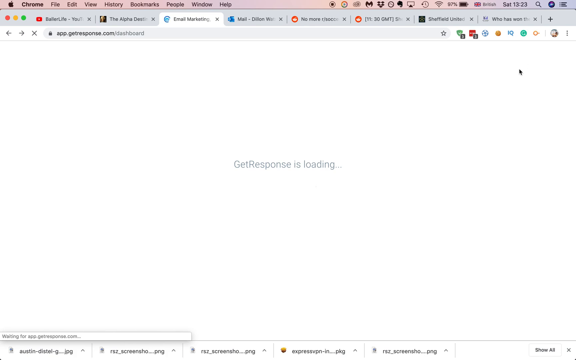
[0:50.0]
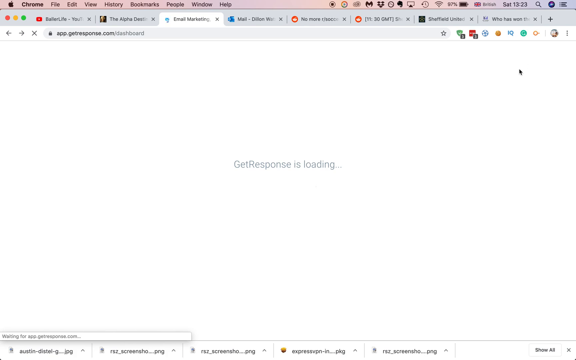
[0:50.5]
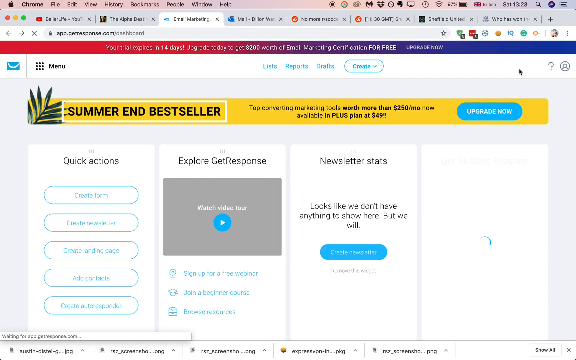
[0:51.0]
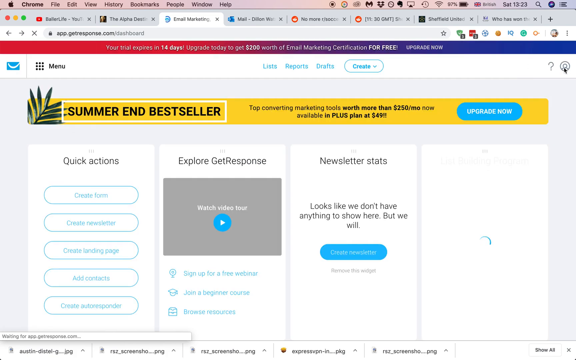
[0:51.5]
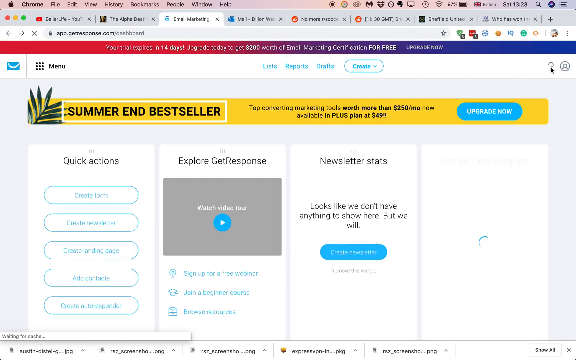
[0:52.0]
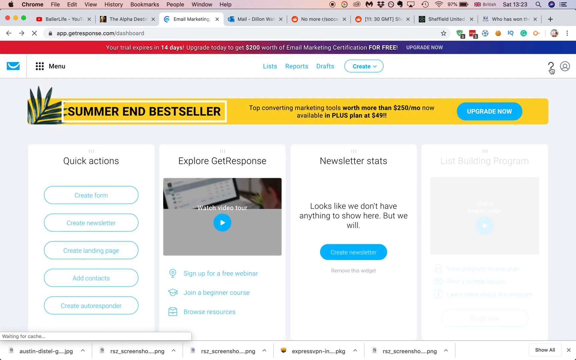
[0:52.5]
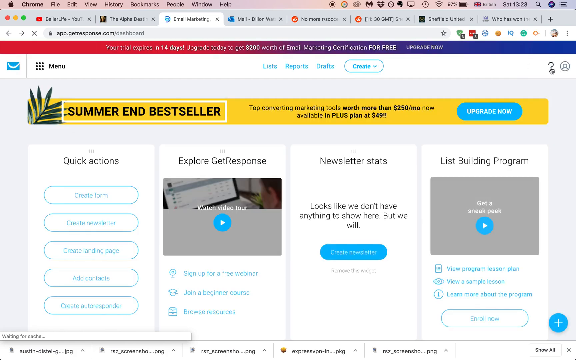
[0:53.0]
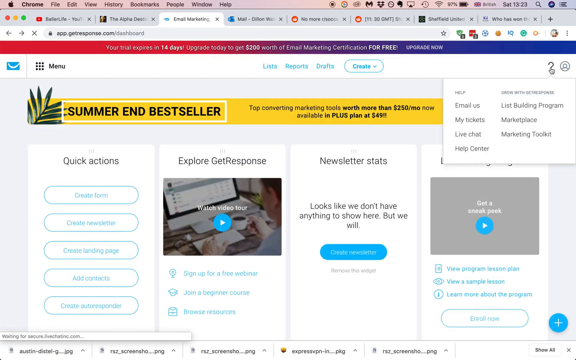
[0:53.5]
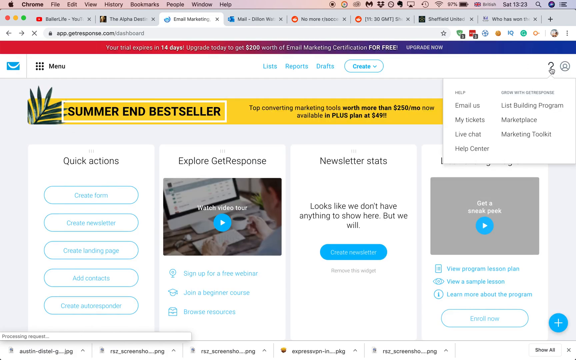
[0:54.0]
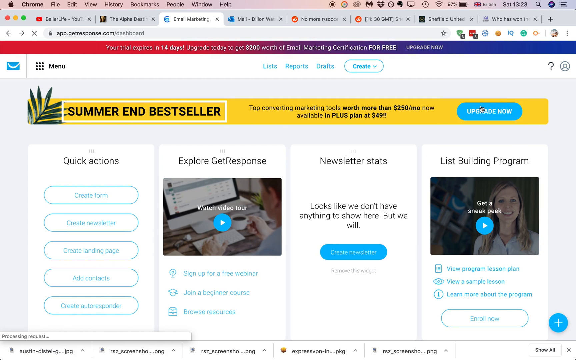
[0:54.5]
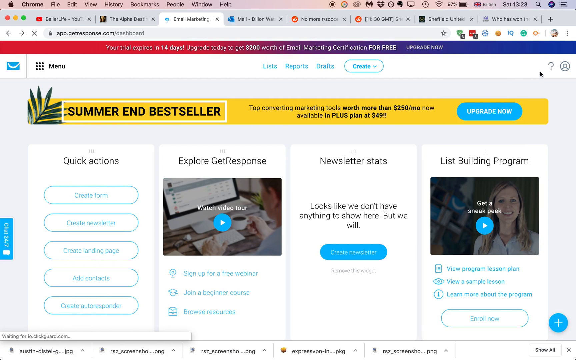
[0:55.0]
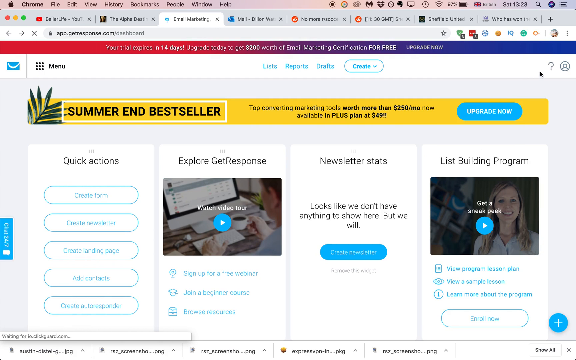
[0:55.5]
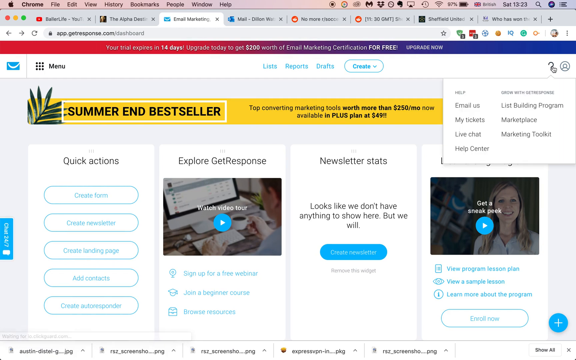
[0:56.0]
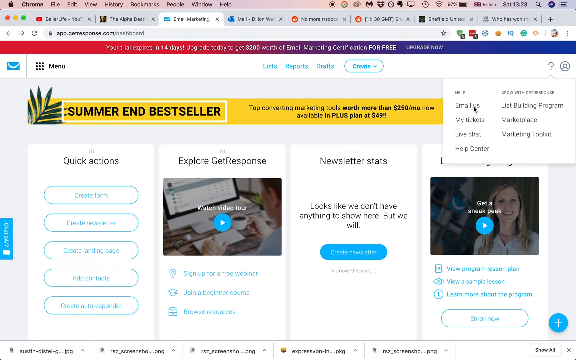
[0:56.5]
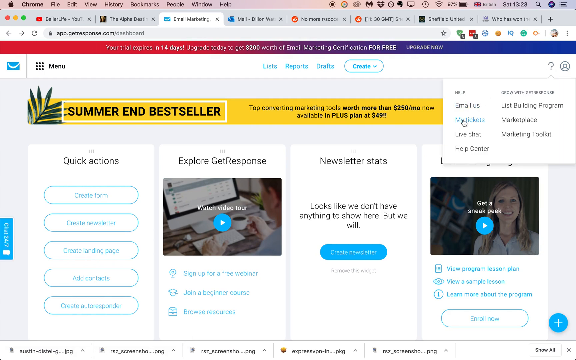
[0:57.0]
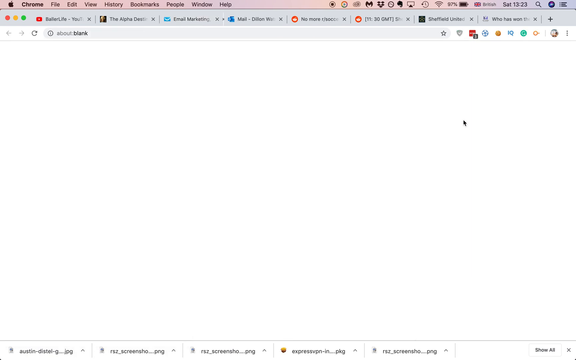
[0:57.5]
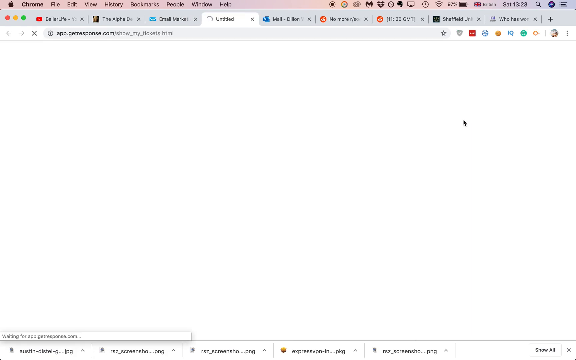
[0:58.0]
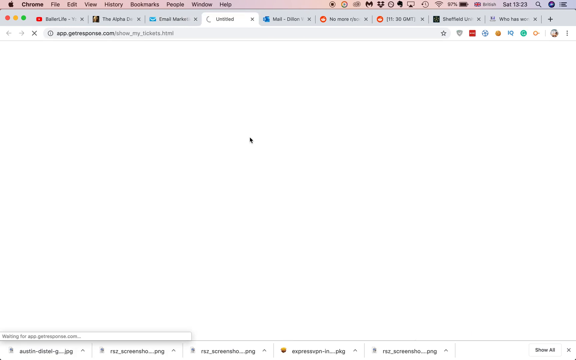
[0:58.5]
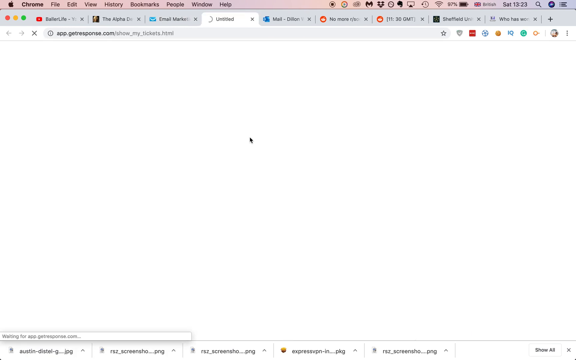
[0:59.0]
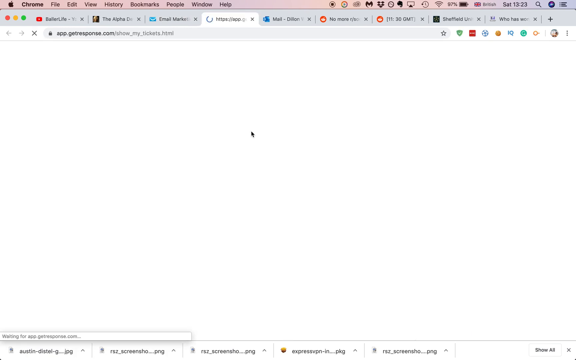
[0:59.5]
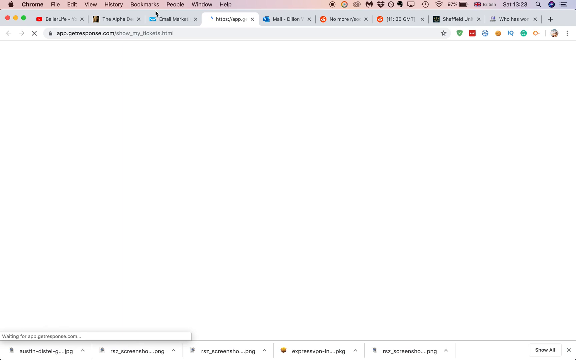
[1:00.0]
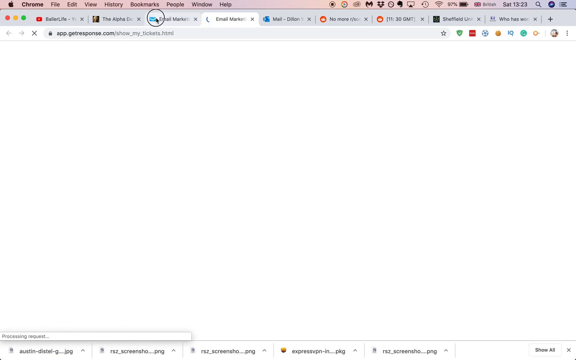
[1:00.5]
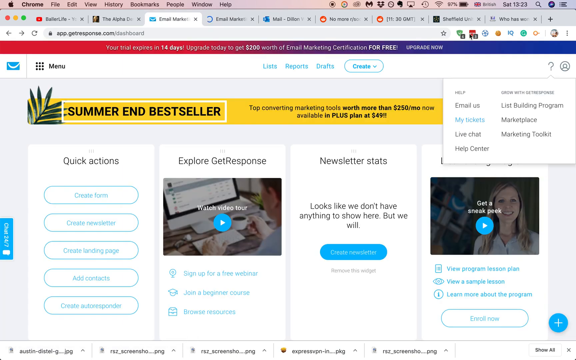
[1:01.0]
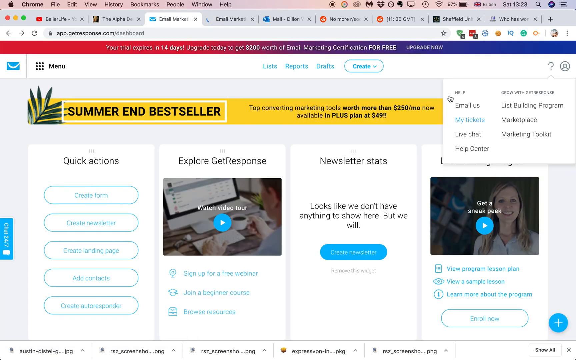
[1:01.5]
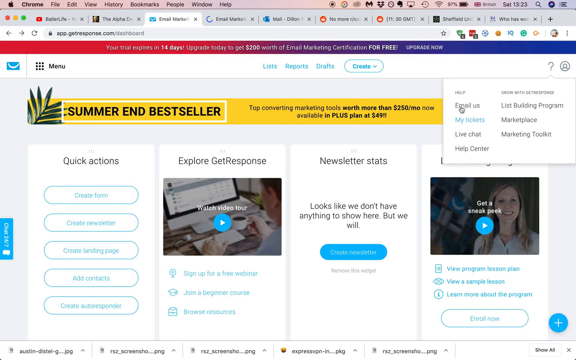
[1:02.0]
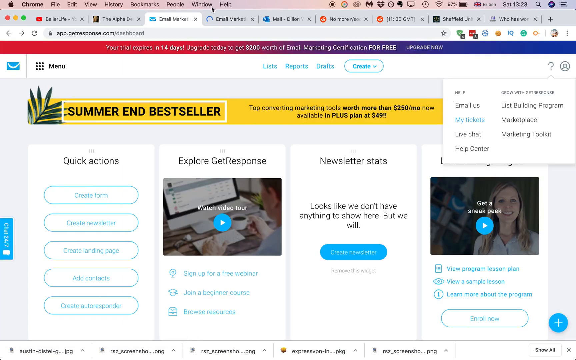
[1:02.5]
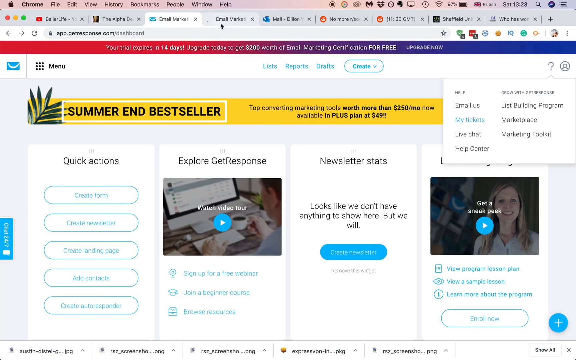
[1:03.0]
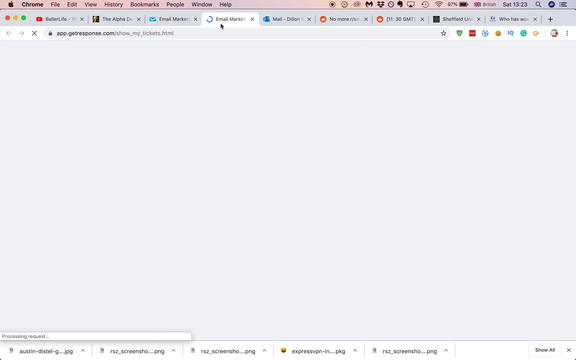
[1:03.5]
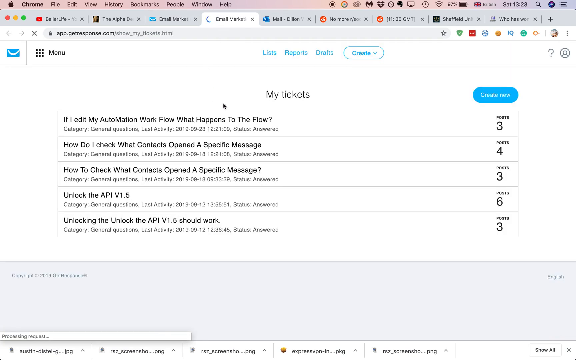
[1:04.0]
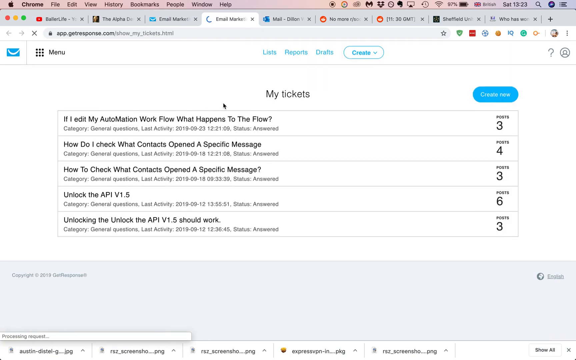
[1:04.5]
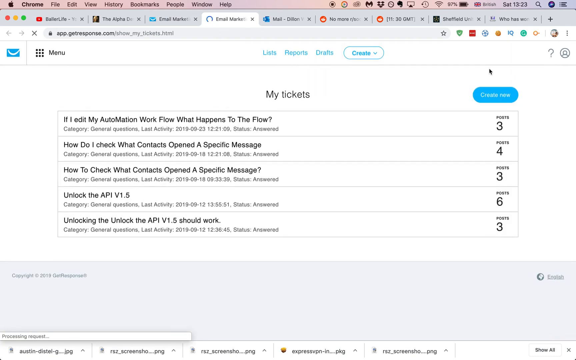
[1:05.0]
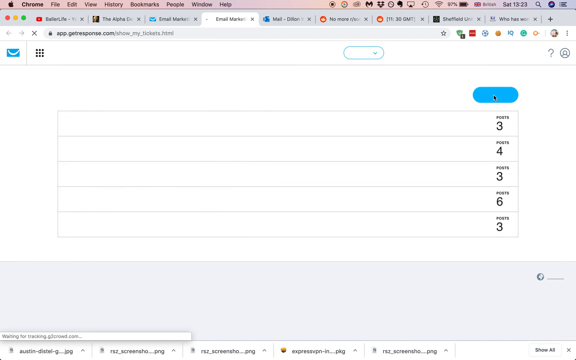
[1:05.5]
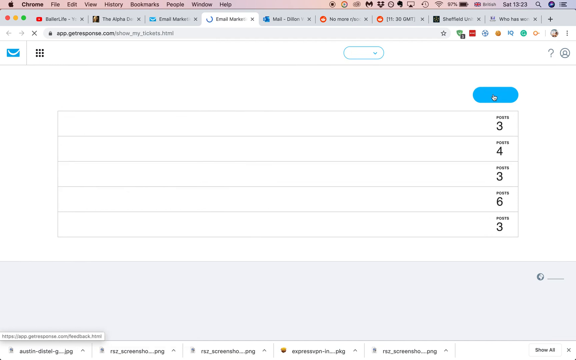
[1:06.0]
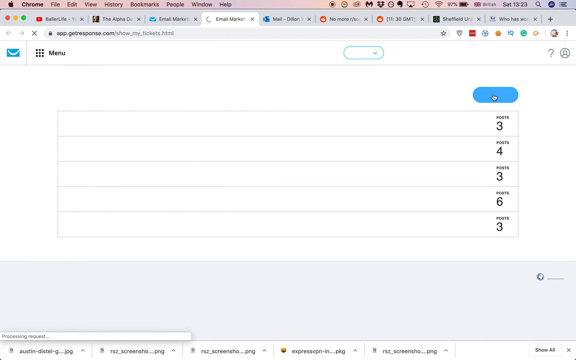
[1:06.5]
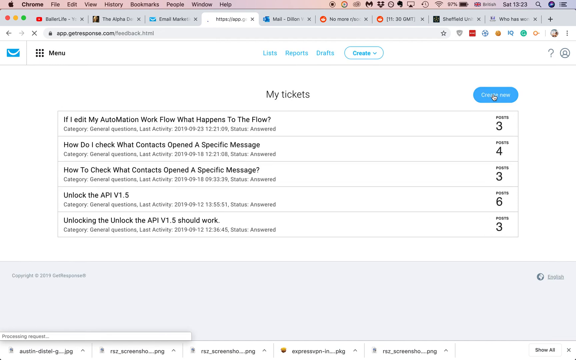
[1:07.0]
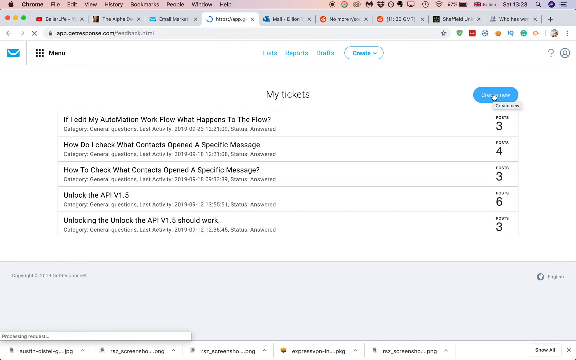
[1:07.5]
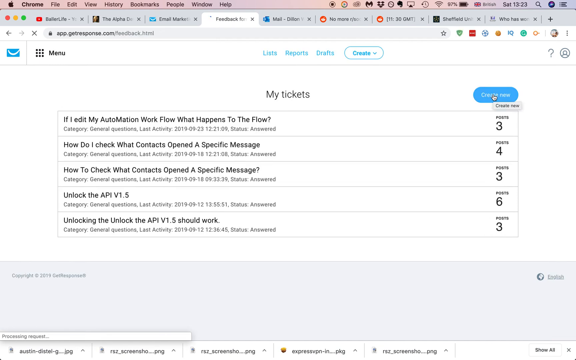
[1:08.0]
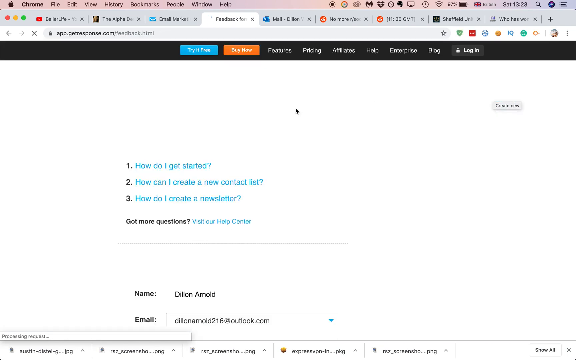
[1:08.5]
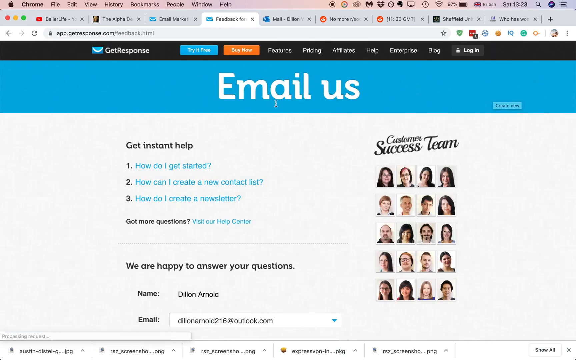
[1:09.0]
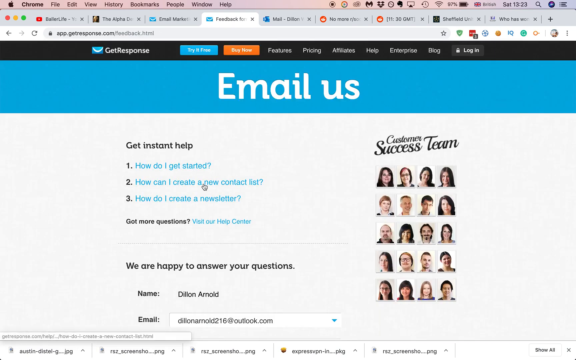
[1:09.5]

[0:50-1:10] The original dashboard of the website returns. The user hovers over the question mark, and a drop-down menu appears. The user moves the mouse slightly to the left while the page is loading, then navigates back to the original website by clicking on its tab, and then goes back to the new tab. The page reads "my tickets". The user hovers over a blue "create now" button and is redirected to a different section. This new page has white text on top of a blue block at the top, with smaller text beneath it that says "get instant contact list". Under that are three numbered options: "How do I get started?", "How can I create a new contact list?" and "How do I create a newsletter?"